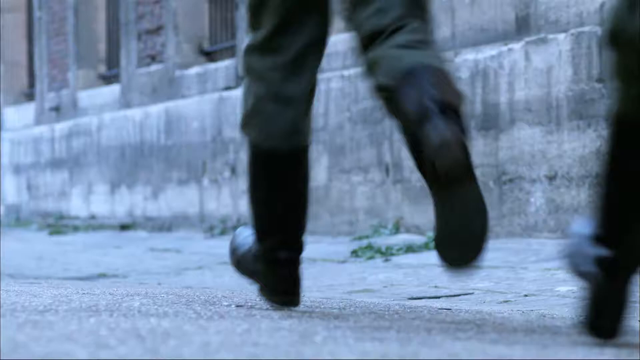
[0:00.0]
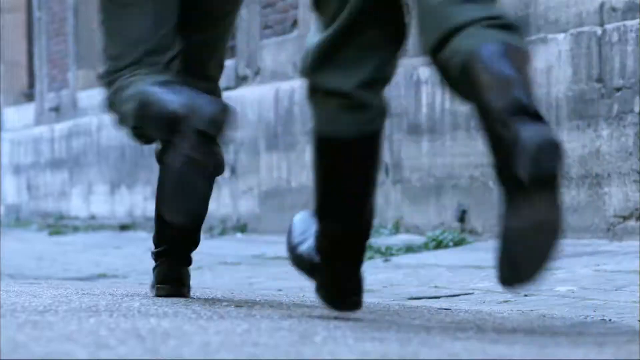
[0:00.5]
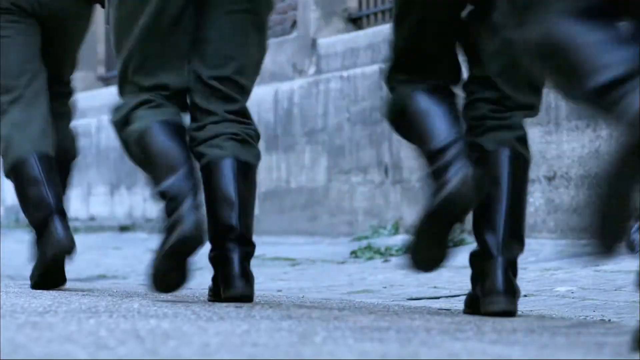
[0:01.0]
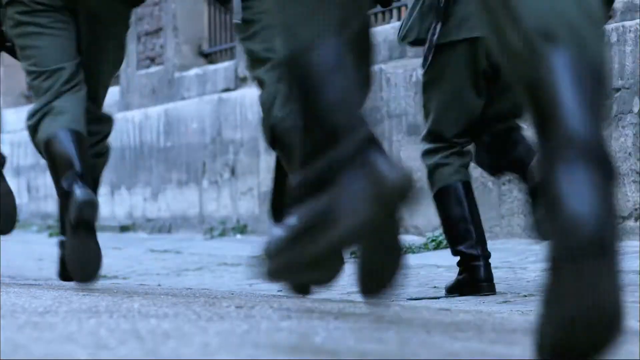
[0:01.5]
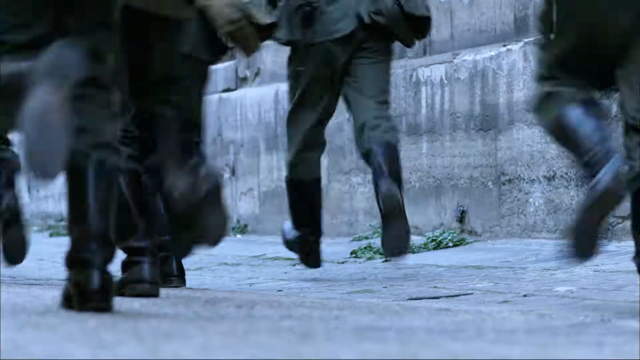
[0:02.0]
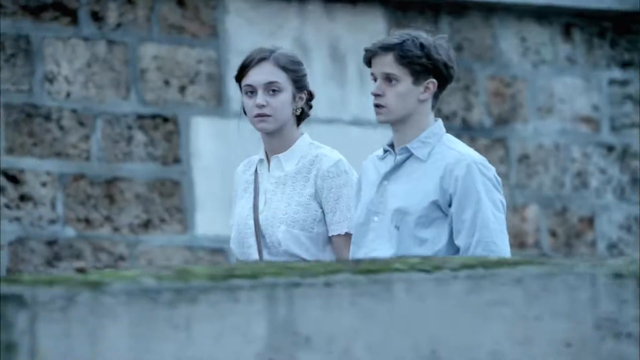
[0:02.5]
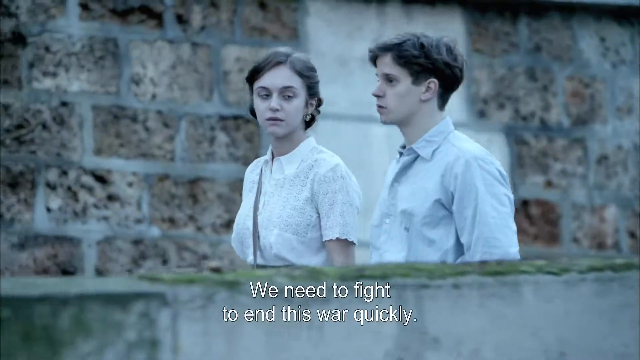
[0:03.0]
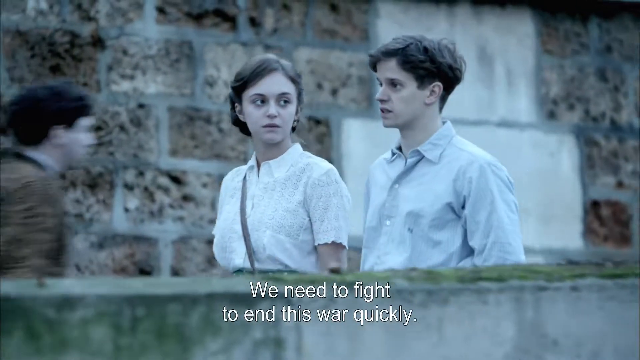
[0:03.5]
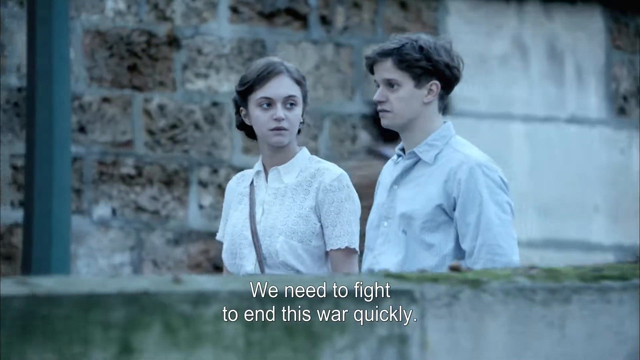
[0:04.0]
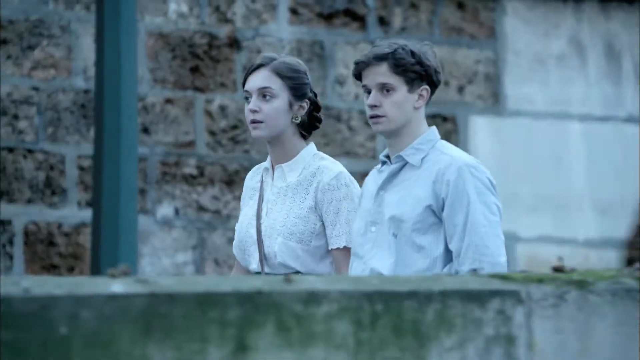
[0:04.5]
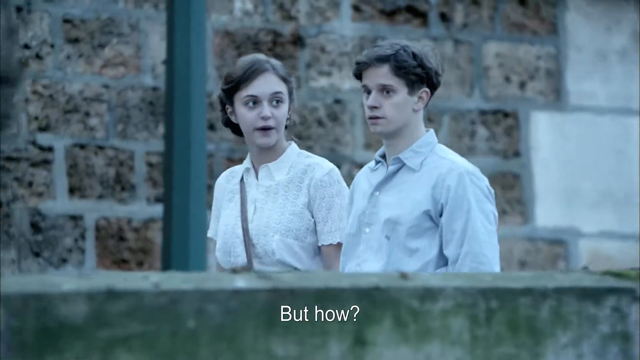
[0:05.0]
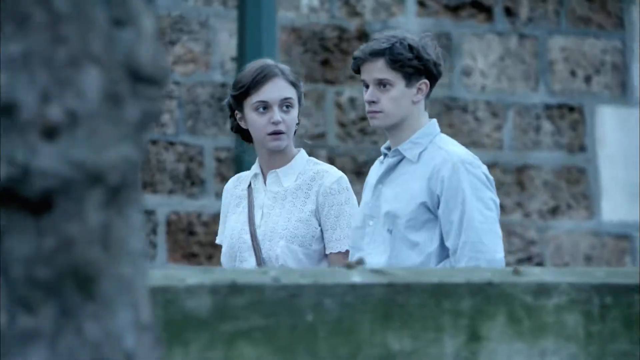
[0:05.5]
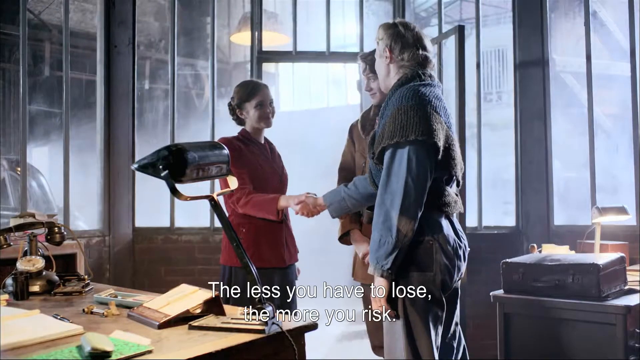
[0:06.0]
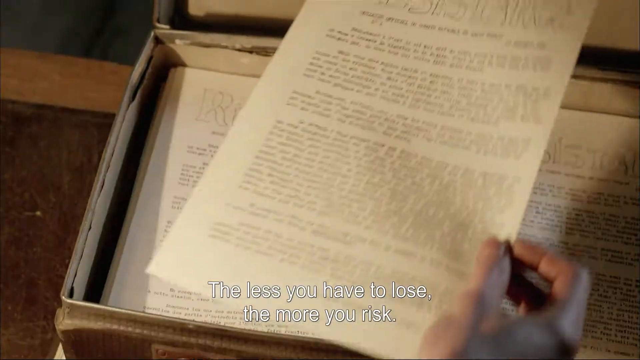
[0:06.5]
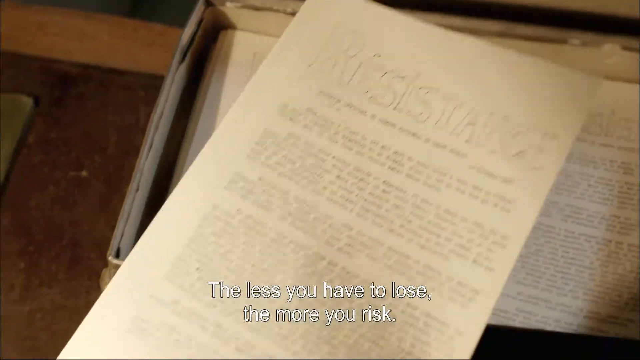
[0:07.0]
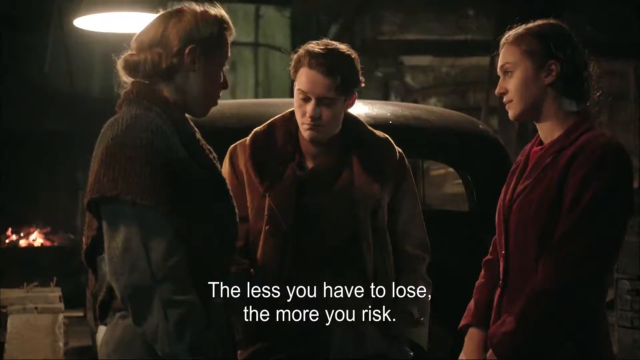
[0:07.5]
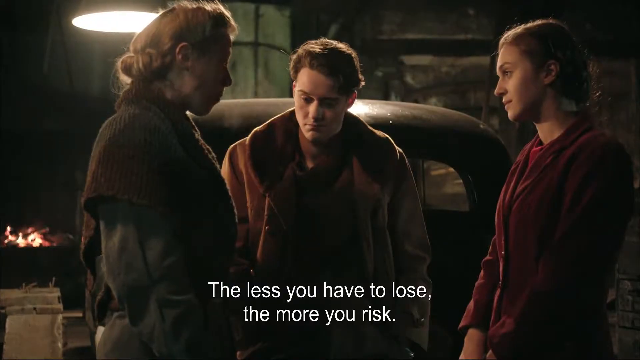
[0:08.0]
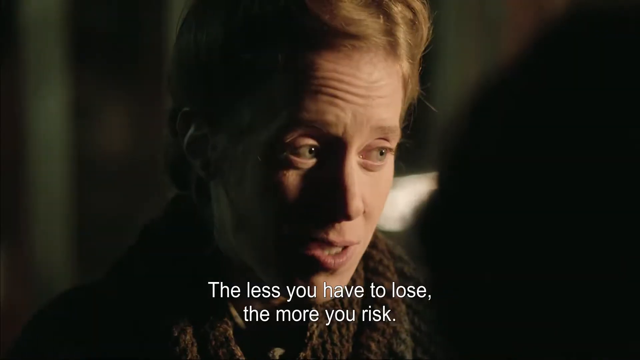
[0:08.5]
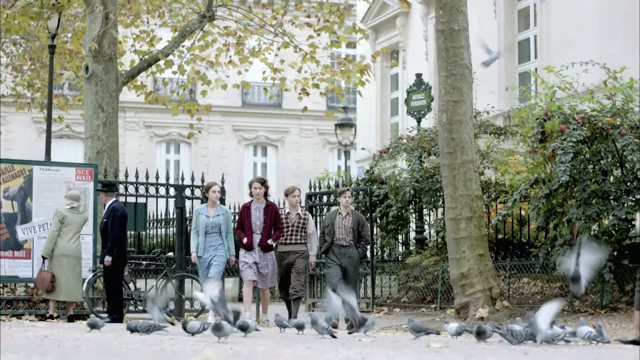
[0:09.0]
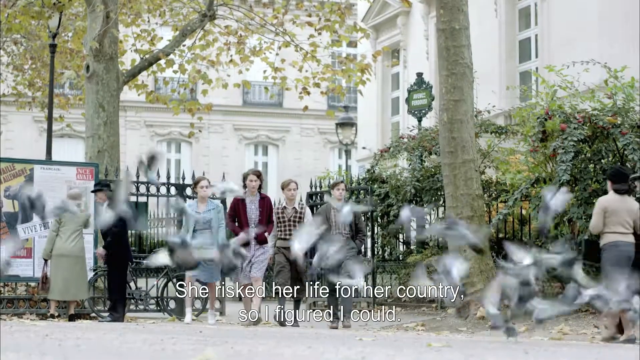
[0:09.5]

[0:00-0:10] Made up of very quick snippets, this appears to be a trailer for a full-length movie. It opens with boots running on the ground, worn by people in khaki pants tucked inside the boots; approximately seven different people are running in this scene. Next, a young man on the right and a young woman on the left walk in front of a stone cobbled wall. The young man has a full set of hair and wears a blue shirt. The young woman has her long hair pulled back in a bun and wears a white shirt, with a purse over her right shoulder held by her left hand. The young man walks forward and speaks while the young woman looks at him, then turns to the front and responds. According to the subtitles, the young man says "we need to end this war quickly" and the young woman responds, "but how?". The next scene briefly shows the young woman, dressed in a red shirt and a gray skirt, shaking hands with a couple of older people who are taller than her, in an office. One appears to be a man with his back turned to the camera, wearing a brown sweater with a blue shirt underneath. Beside him is a woman with dark hair wearing a brown sweater. The man says, "The less you have to lose, the more you risk". The scene shifts to a few pages in a box, one of which is being removed. A quick scene follows of the young woman, the young man and an older woman to their left, who appear to be having a meeting in the dark in front of a car, with a fire burning in the lower left-hand corner of the screen. Then four young people, two men and two women, walk towards the camera. Behind them is a majestic-looking Renaissance building, and a flock of pigeons flies between them and the camera. According to the subtitles, one of the group says "She risked her life for her country, so I figured I could".